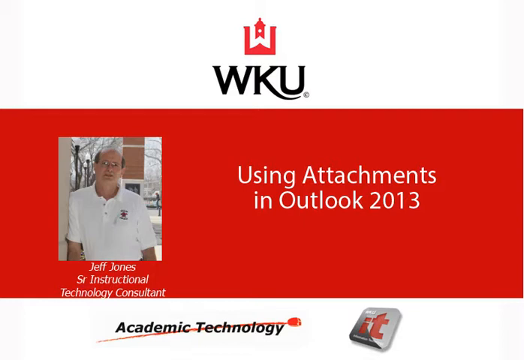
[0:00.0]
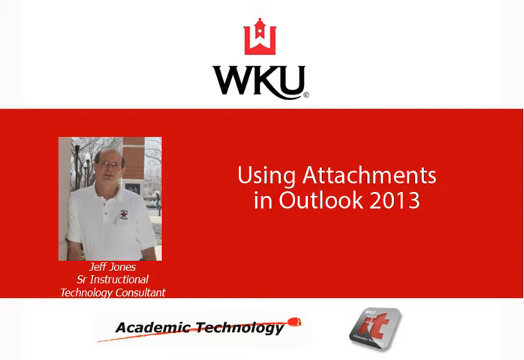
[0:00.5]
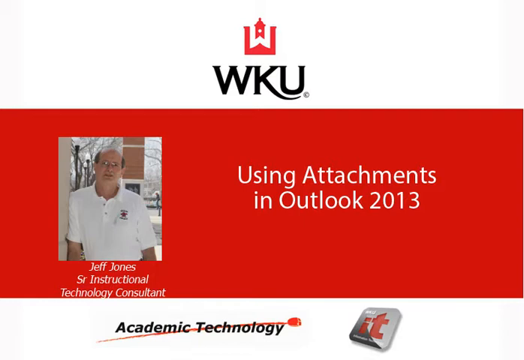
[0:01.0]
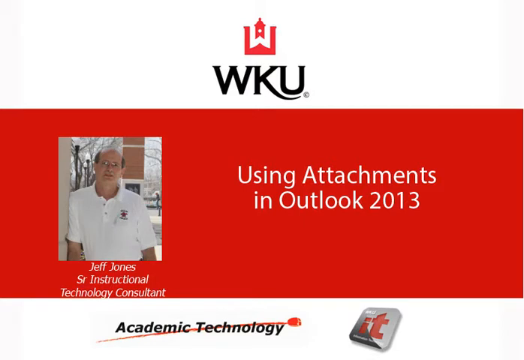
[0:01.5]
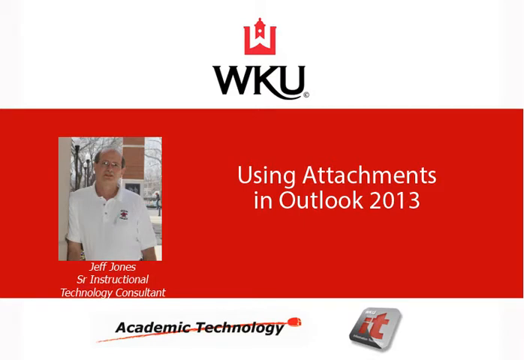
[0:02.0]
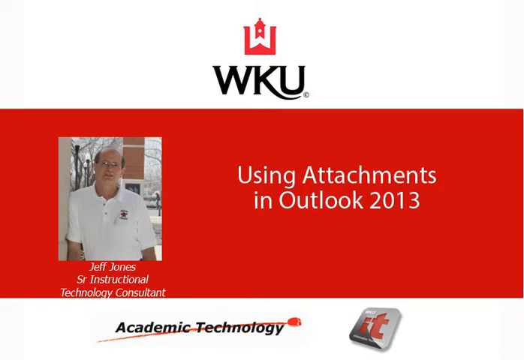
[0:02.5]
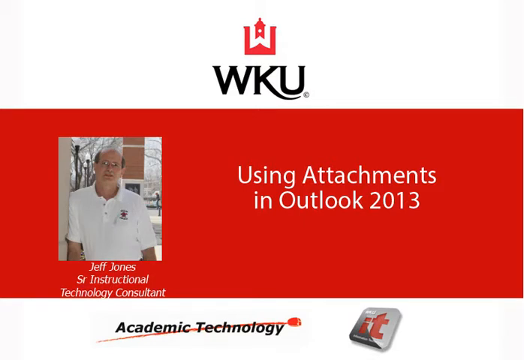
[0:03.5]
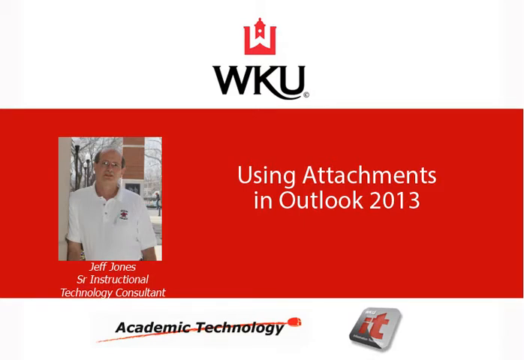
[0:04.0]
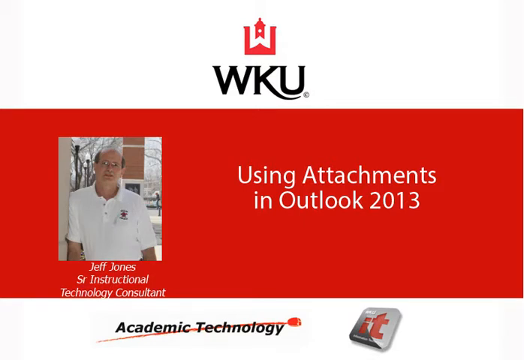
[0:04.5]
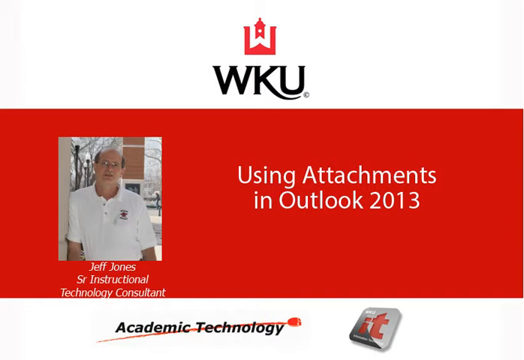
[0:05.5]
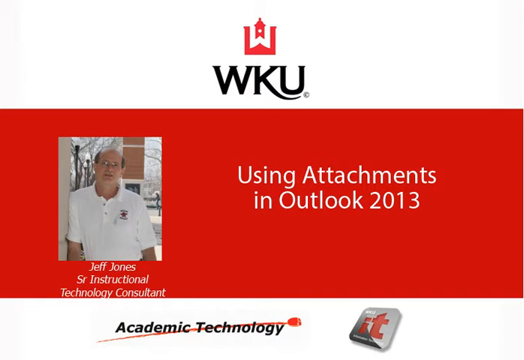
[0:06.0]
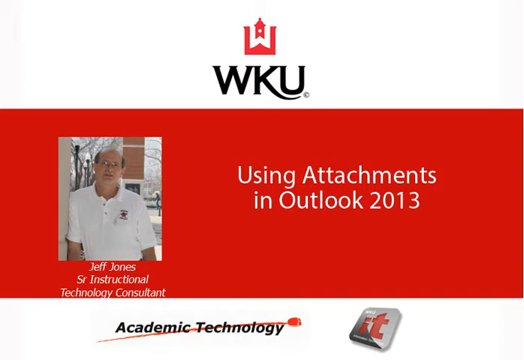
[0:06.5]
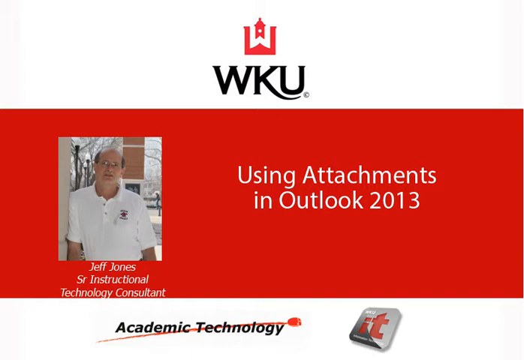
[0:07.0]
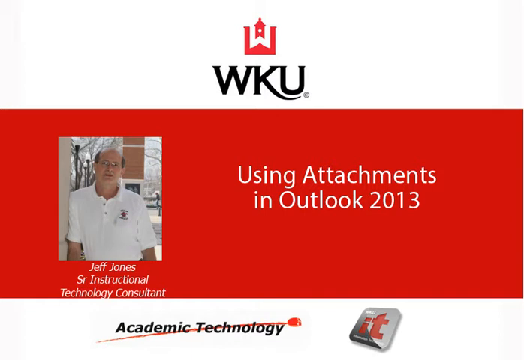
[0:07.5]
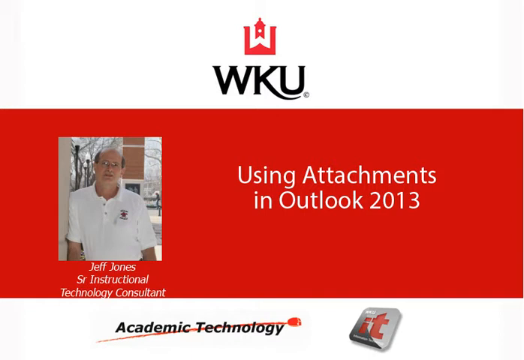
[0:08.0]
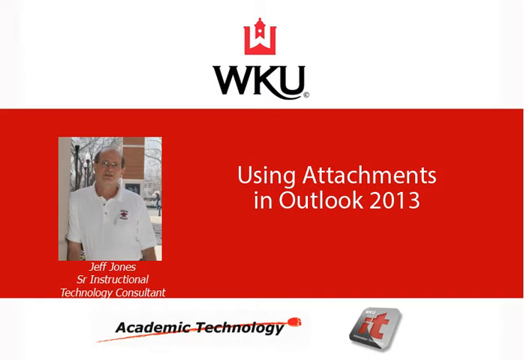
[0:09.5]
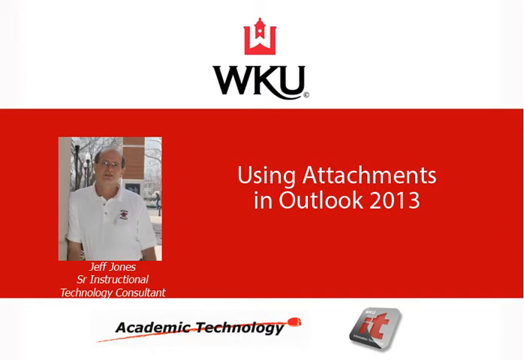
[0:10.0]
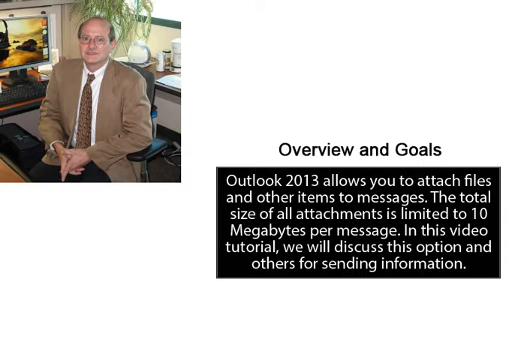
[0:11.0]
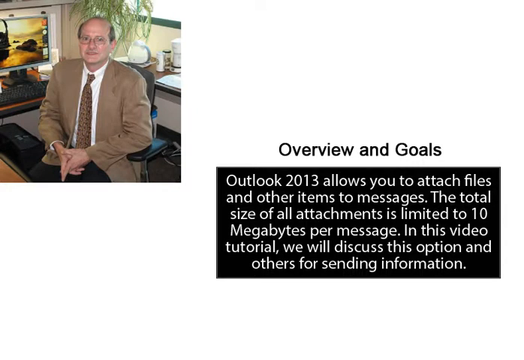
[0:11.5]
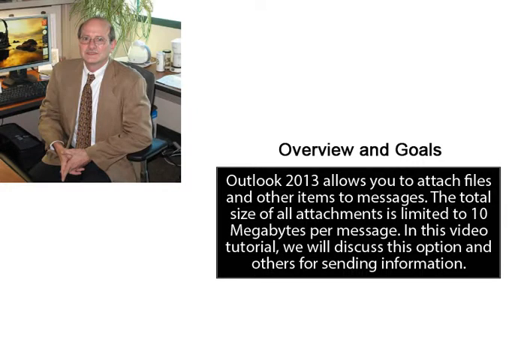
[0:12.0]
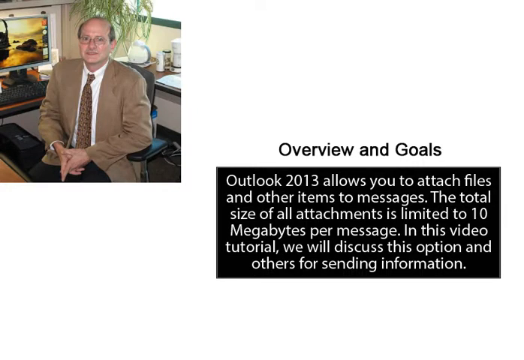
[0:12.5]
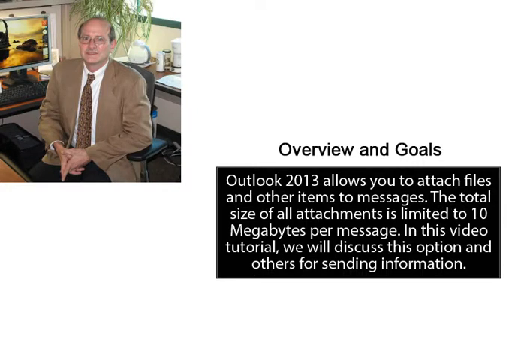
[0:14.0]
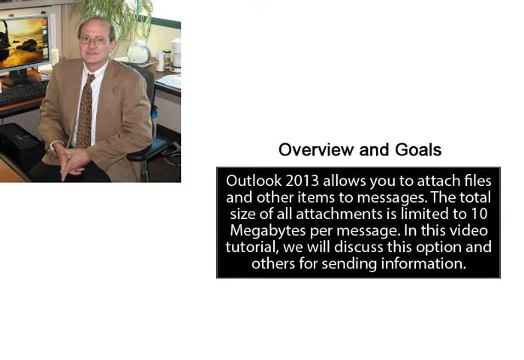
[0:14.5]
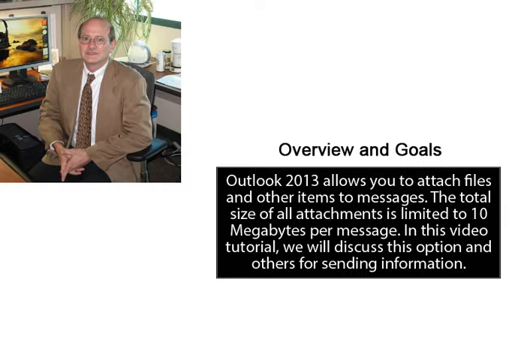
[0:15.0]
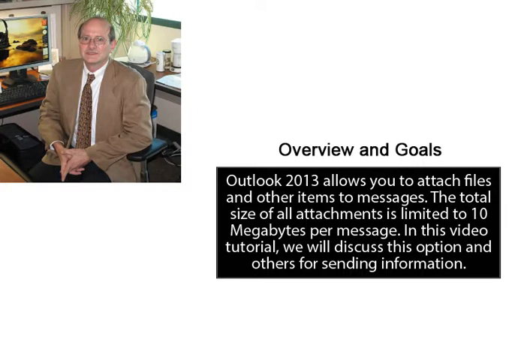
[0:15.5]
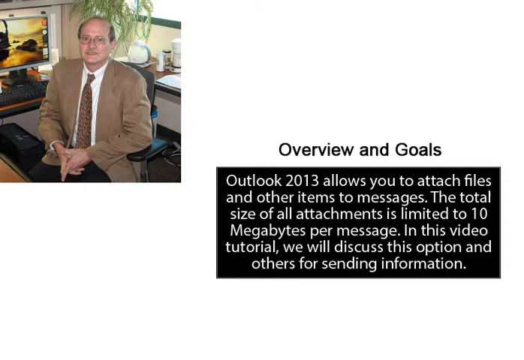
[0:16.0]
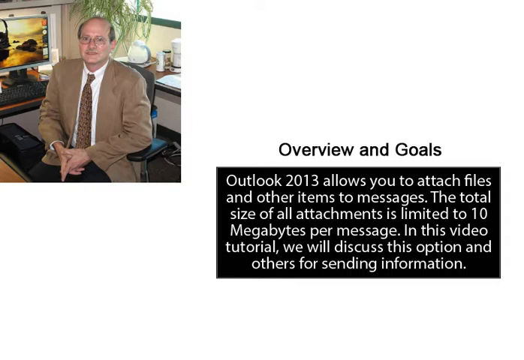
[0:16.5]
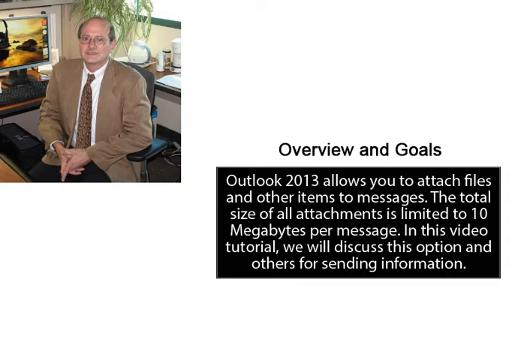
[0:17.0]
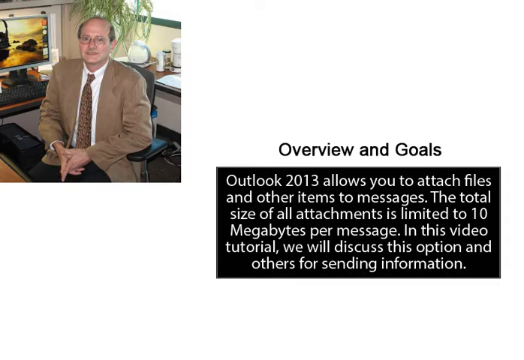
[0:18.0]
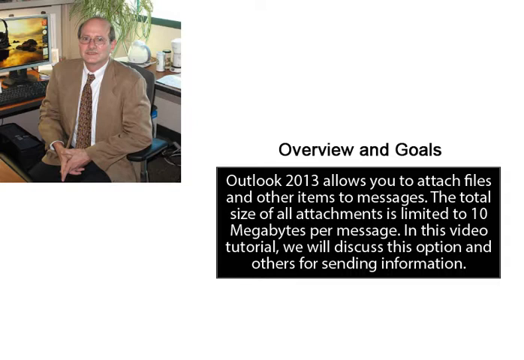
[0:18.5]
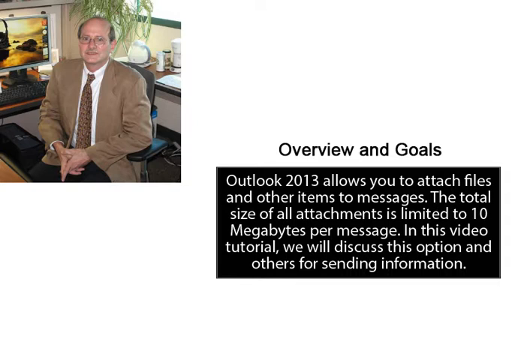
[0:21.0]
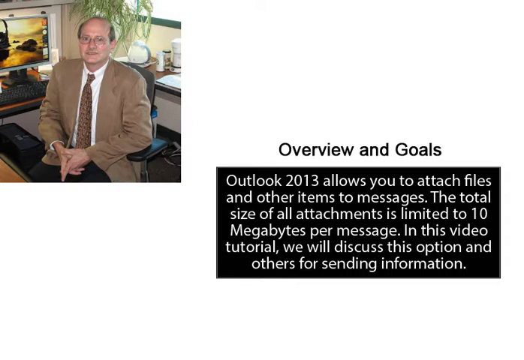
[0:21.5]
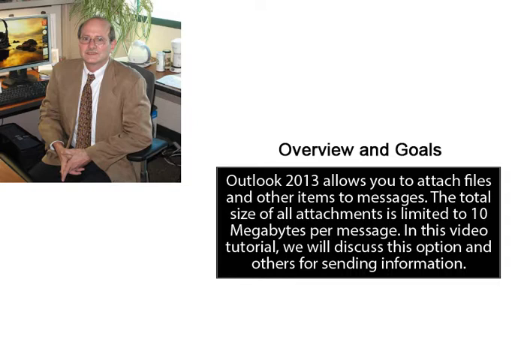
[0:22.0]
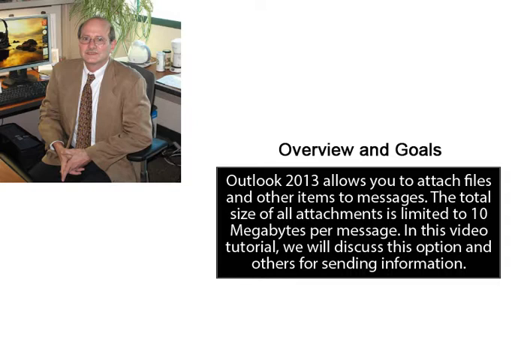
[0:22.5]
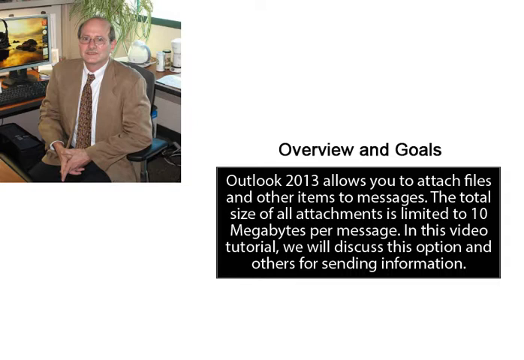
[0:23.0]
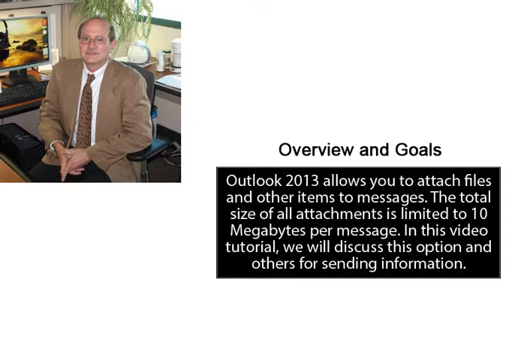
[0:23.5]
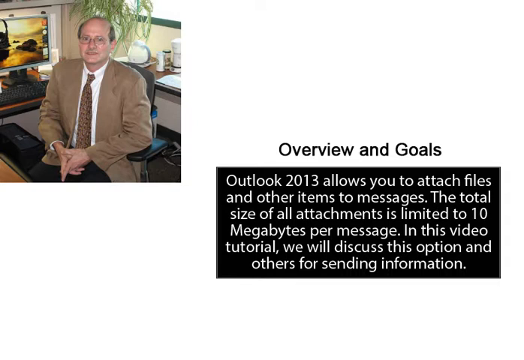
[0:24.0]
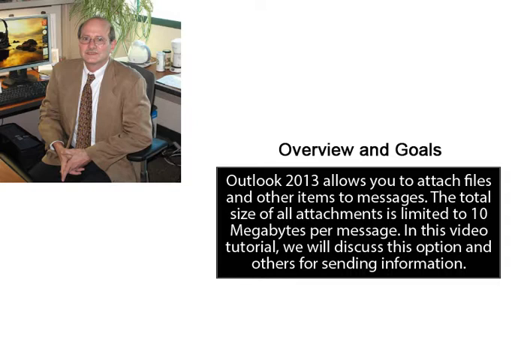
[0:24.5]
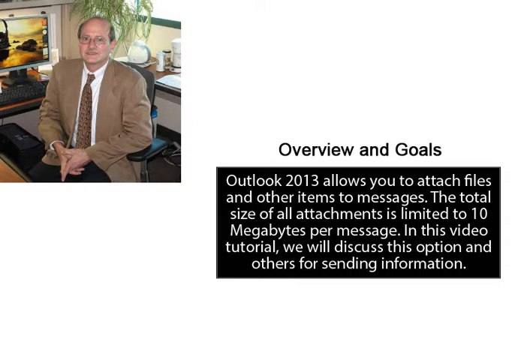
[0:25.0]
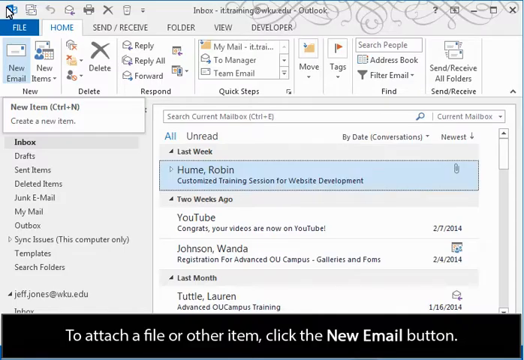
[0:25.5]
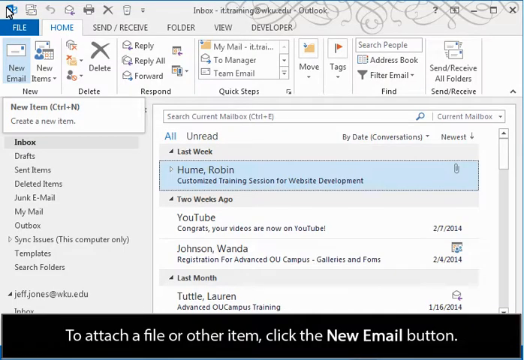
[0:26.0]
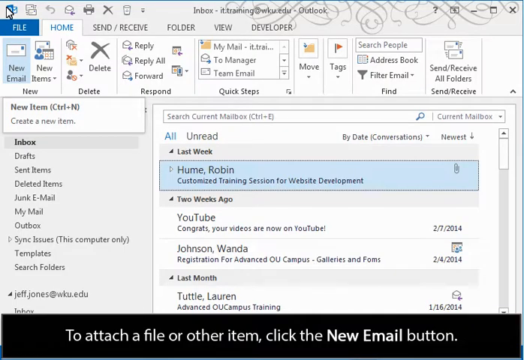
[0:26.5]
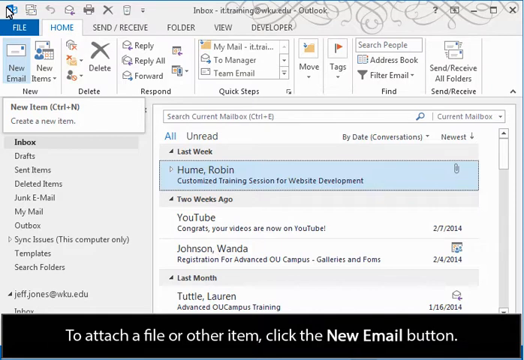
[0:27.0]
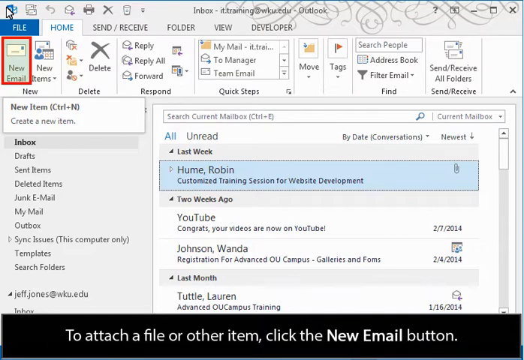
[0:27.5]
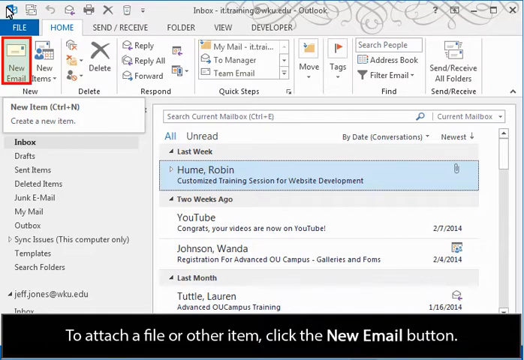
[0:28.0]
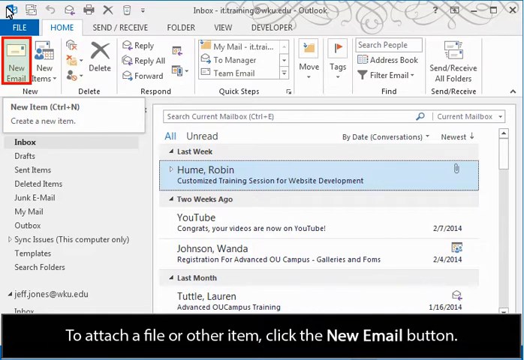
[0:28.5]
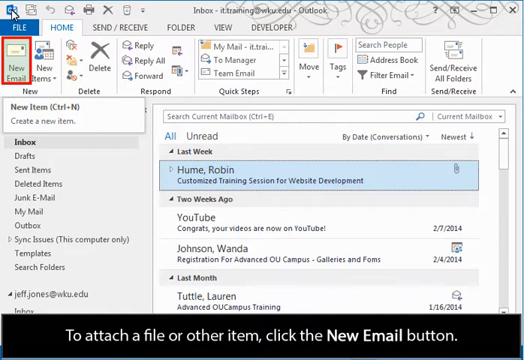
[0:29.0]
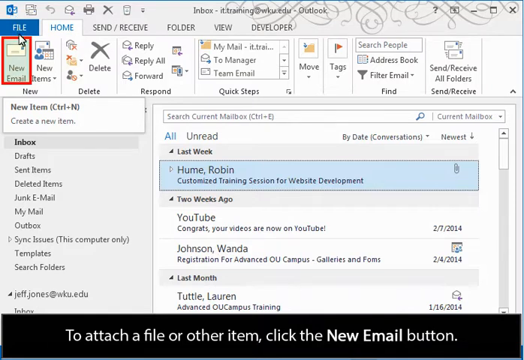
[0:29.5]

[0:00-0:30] The opening page has a white background with a rectangular red block running horizontally across the middle, and the title "Using Attachments in Outlook 2013" is written in white inside the red box. On the left is a picture of the instructor, Jeff Jones, a bald man with a little dark brown hair on the left and right sides of his head. He wears glasses and a short-sleeve white button-down shirt with a logo on the left chest. Beneath the picture is his name and title, "Jeff Jones, Senior Instructional Technology Consultant." "WKU" appears at the top with a small logo of what looks like a building, and "Academic Technology" is at the bottom. The screen changes to a white background with a picture in the left-hand corner of an older white man who is bald with a bit of brown hair on the left and right sides of his head. He wears glasses, a light brown blazer, a white button-down shirt, a brown tie and brown slacks, and he is sitting at a desk. To the right and lower down is the heading "overview and goals," and a black box with white text reads: "Outlook 2013 allows you to attach files and other items to messages. The total size of all attachments is limited to 10 megabytes per message. In this video tutorial we will discuss this option and others for sending information." The screen then changes to what looks like an Outlook email inbox for the account it.training@wku.edu, with the mailboxes listed on the left and the emails on the right. The new email button on the top toolbar is highlighted with a red box, and the cursor clicks it.